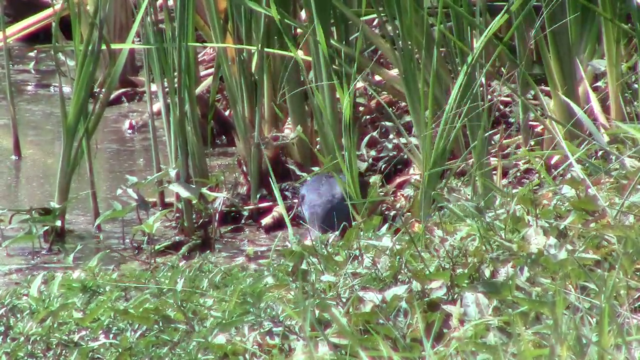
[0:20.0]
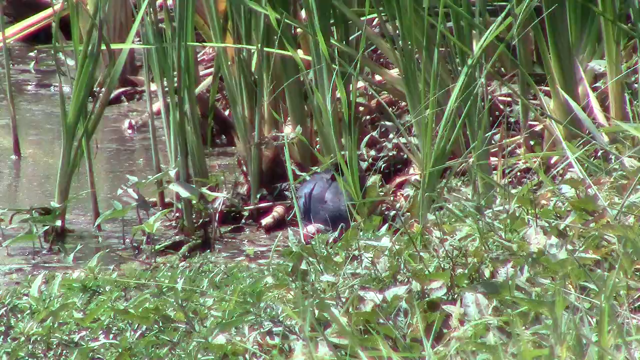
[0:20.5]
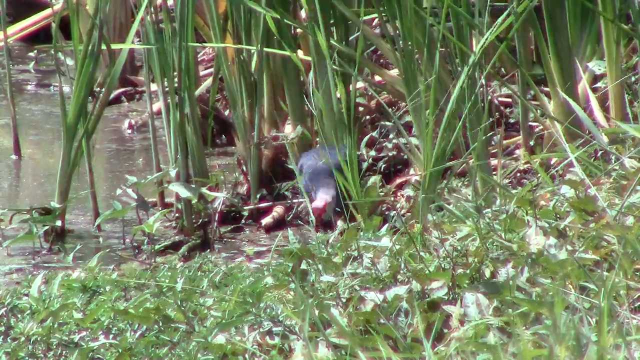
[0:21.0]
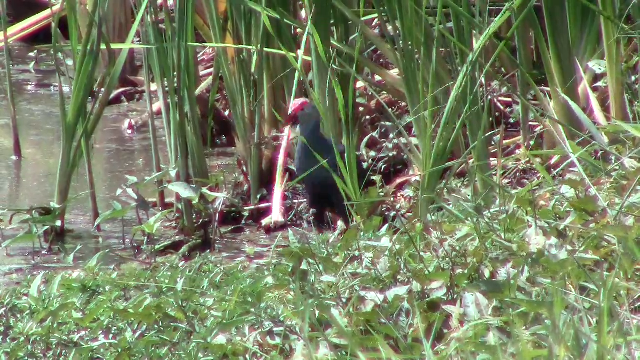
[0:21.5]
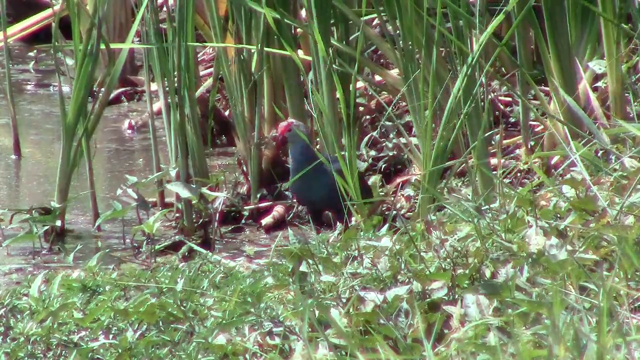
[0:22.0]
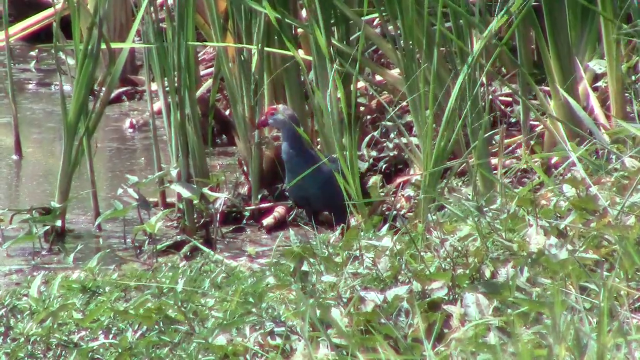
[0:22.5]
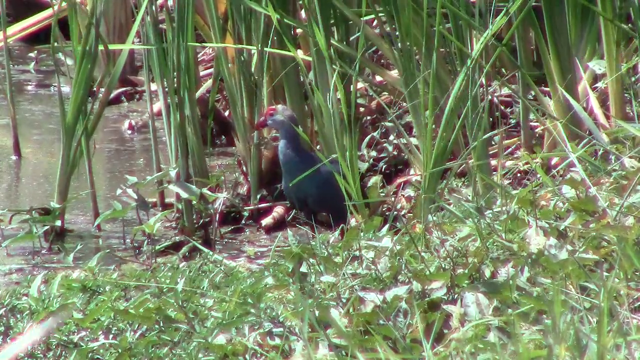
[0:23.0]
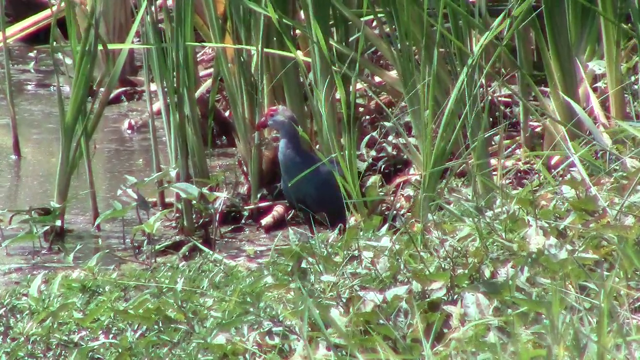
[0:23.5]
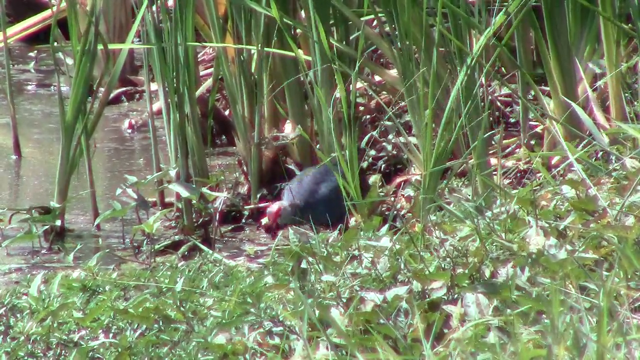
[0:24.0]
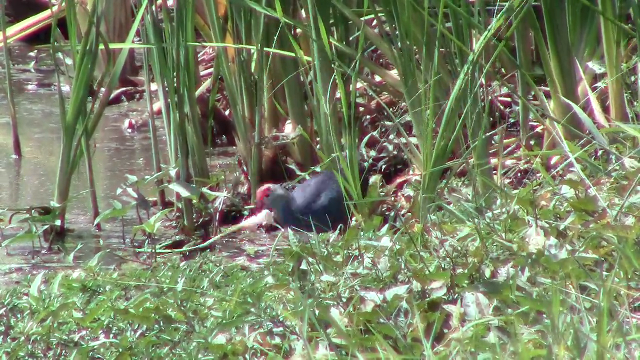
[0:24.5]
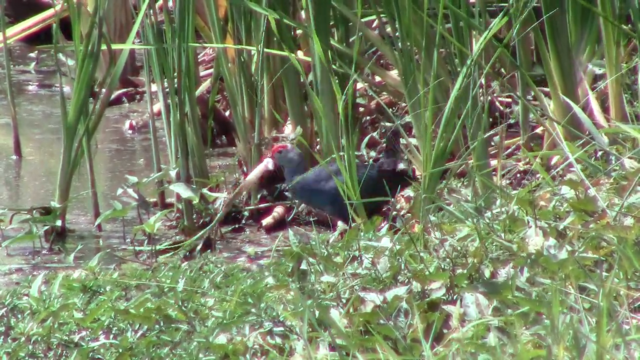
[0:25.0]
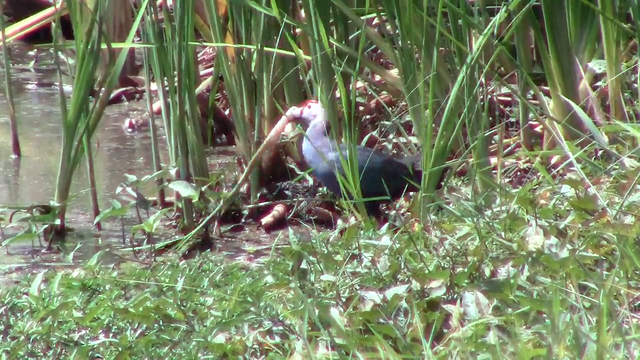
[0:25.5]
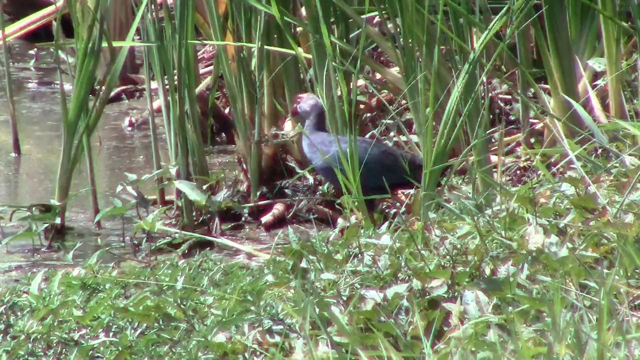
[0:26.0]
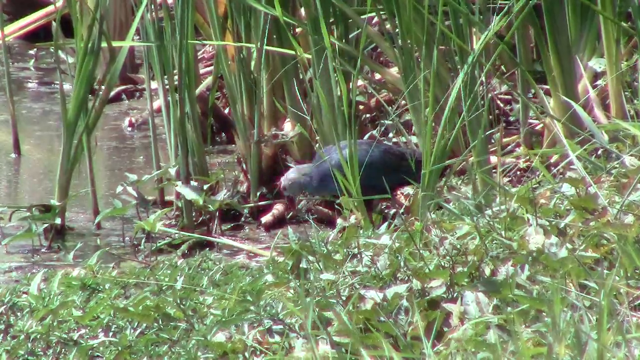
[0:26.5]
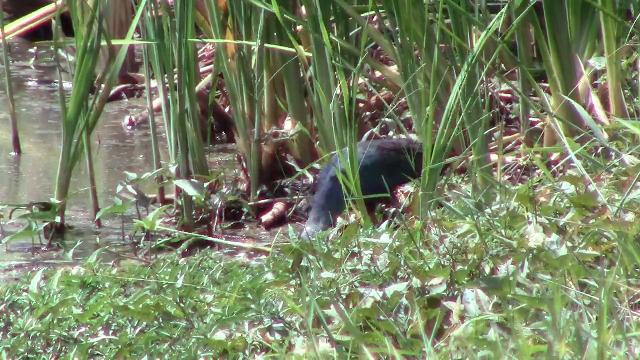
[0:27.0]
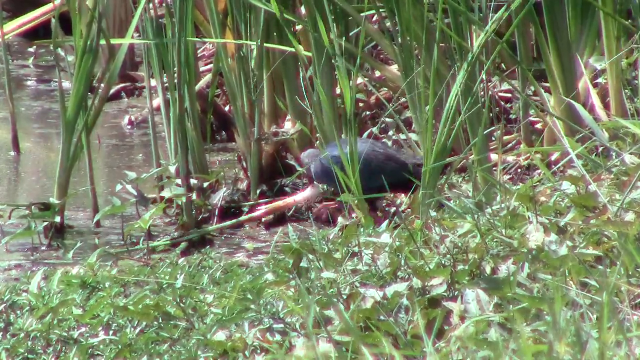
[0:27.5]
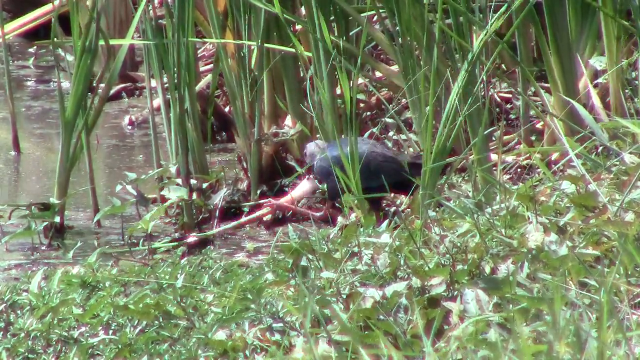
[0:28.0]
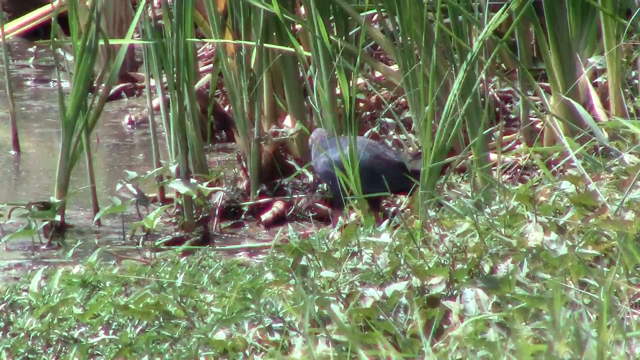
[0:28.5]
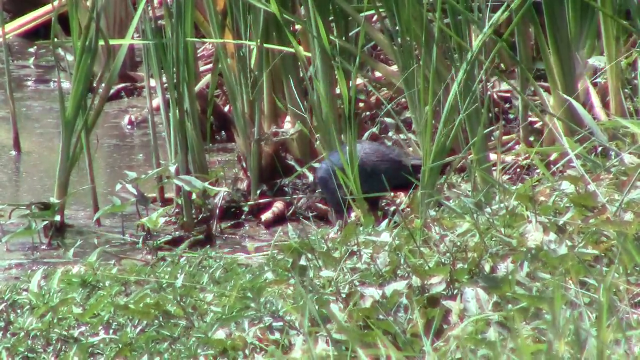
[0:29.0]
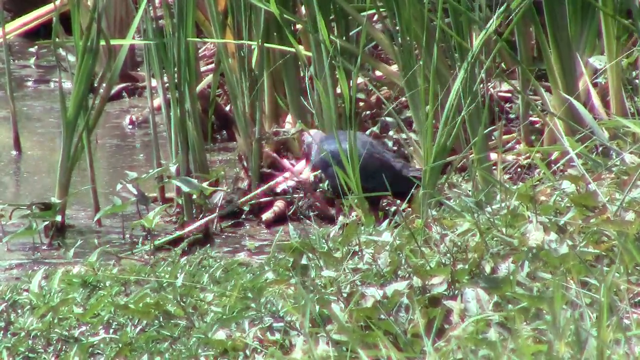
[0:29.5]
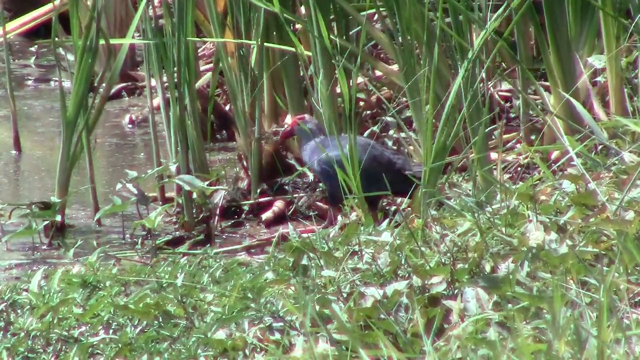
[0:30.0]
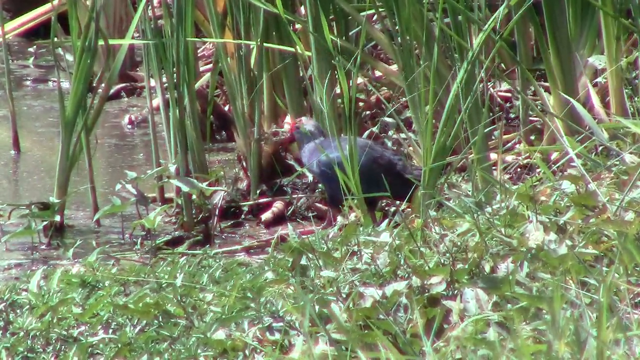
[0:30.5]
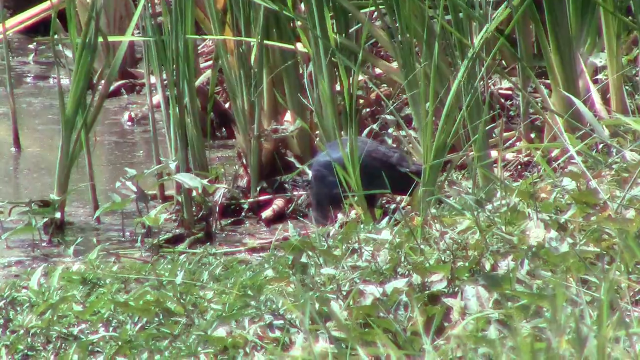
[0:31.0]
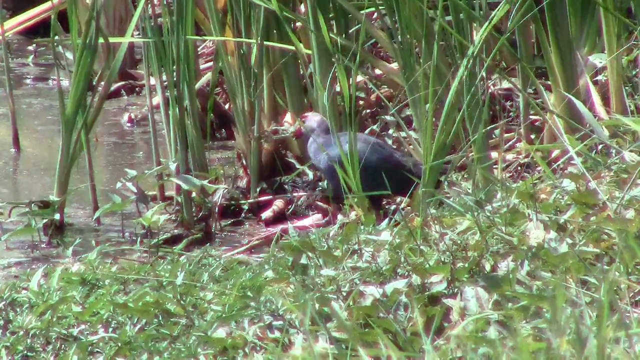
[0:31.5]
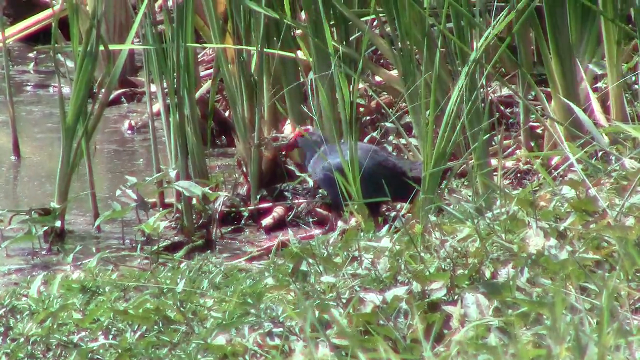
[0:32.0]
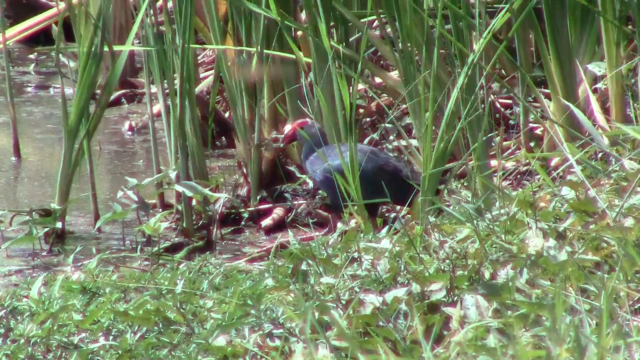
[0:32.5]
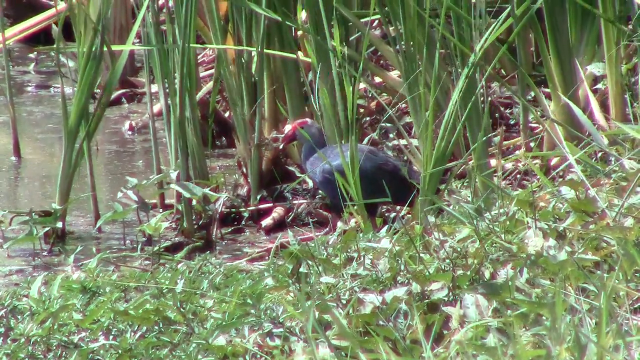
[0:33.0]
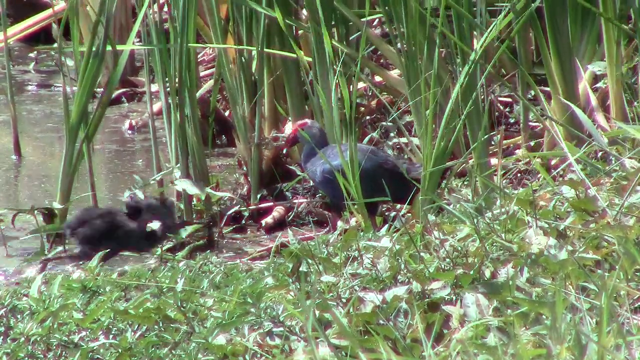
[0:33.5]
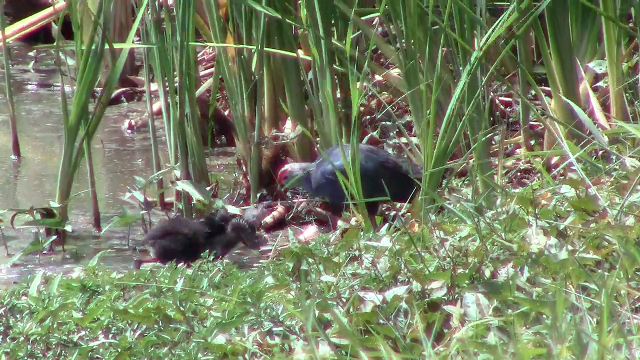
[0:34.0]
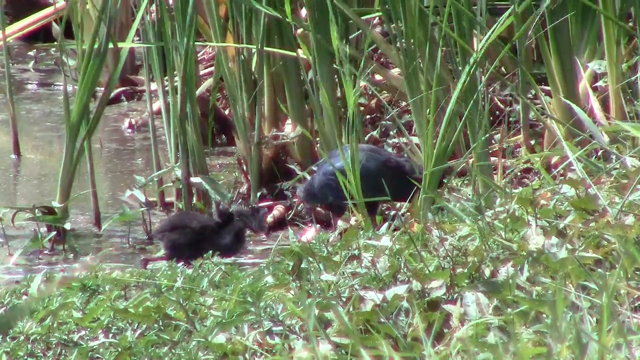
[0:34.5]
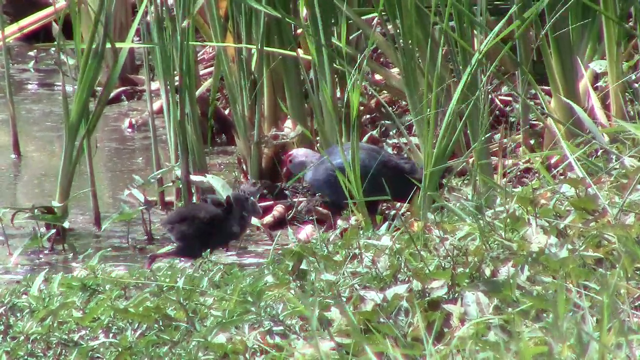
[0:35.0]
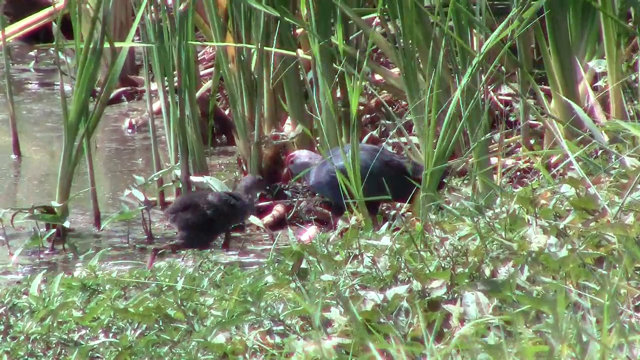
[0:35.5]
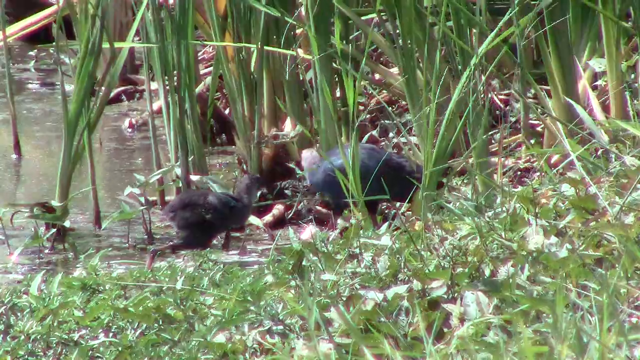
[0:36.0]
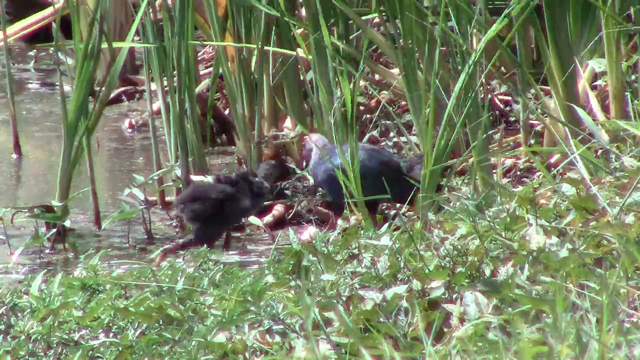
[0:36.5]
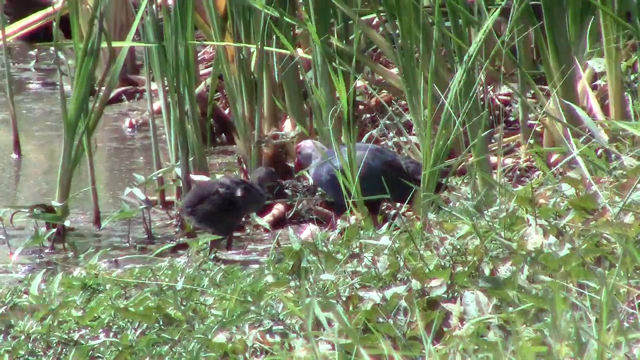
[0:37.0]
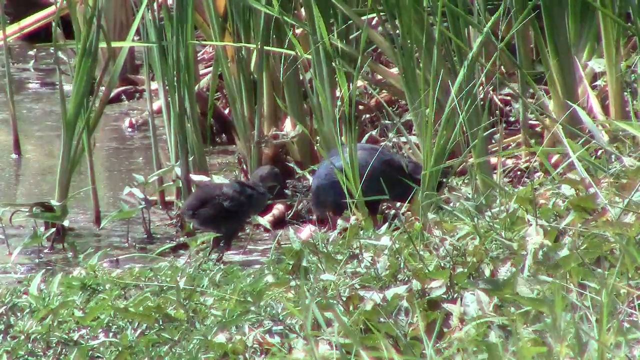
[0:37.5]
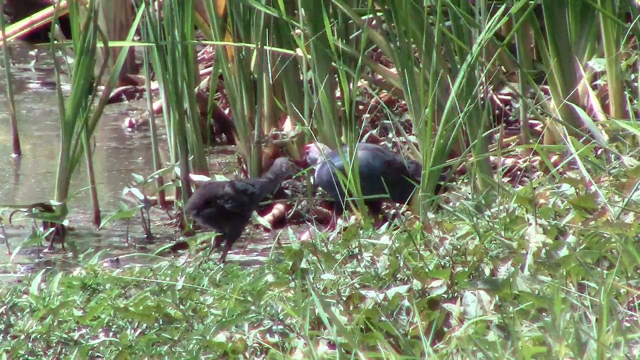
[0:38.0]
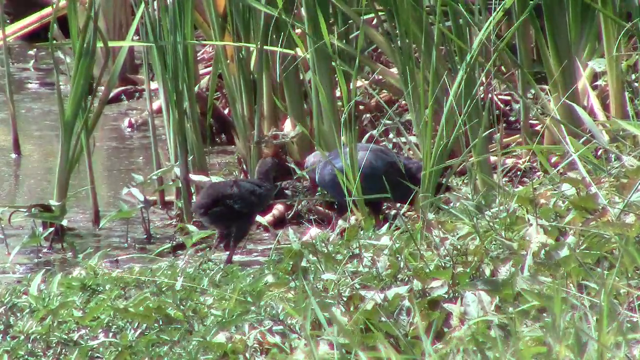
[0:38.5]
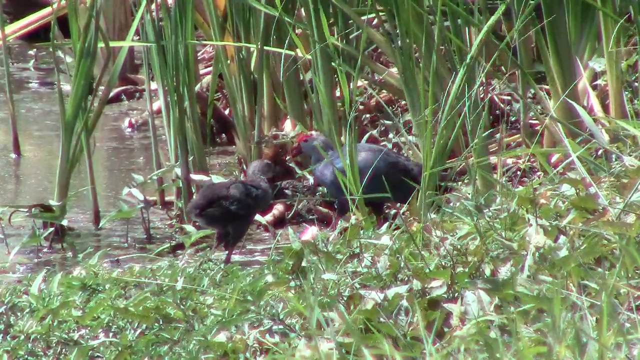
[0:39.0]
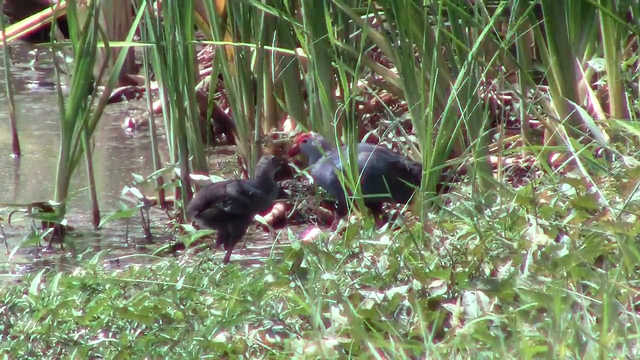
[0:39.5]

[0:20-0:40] The same grey-black bird with a little bit of red tugs repeatedly in the dirt, going for what looks like a piece of grass. Grass is everywhere. Another bird, which is black, flies up to the bird that did the work, and it looks like the black bird wants to fight over the food and is ready to fight for it.